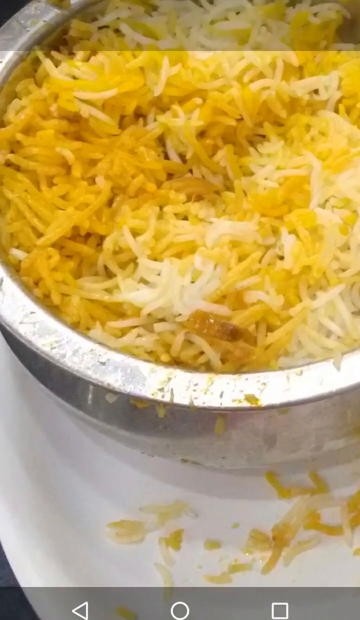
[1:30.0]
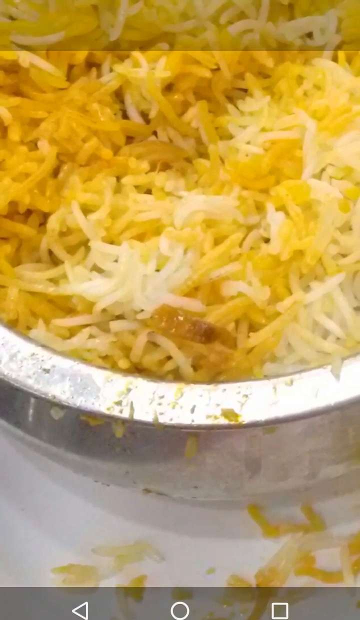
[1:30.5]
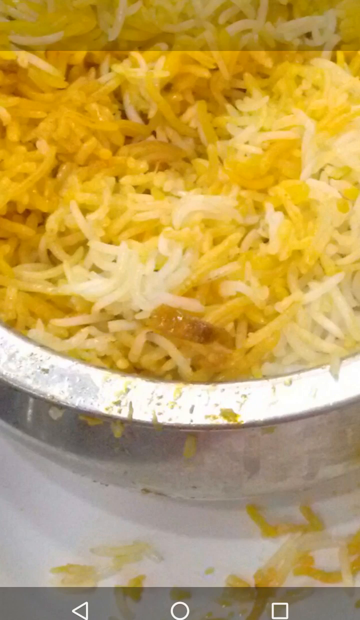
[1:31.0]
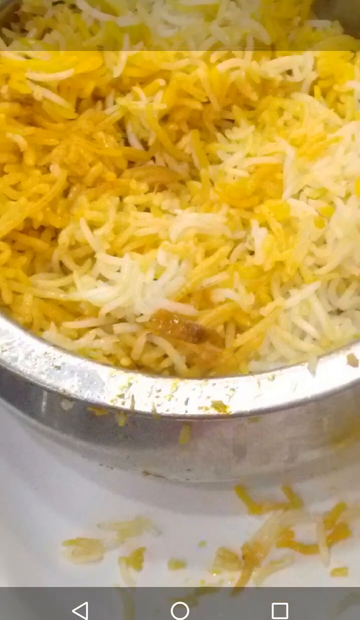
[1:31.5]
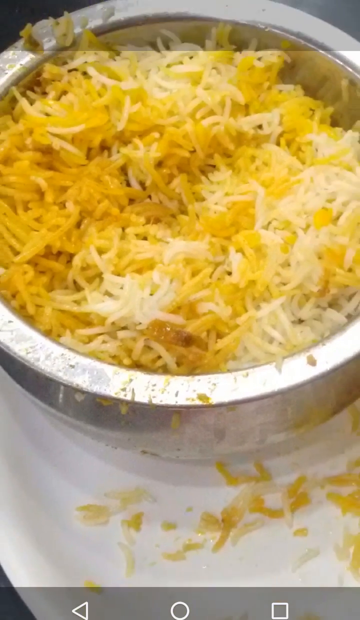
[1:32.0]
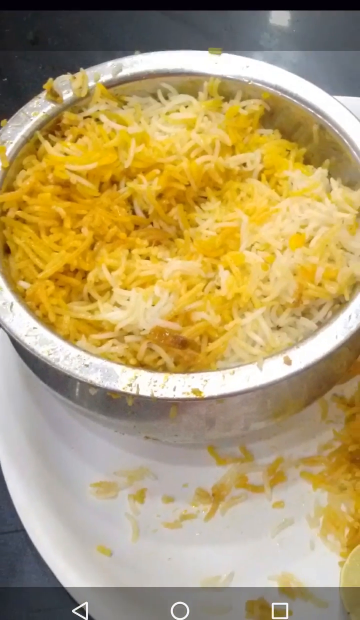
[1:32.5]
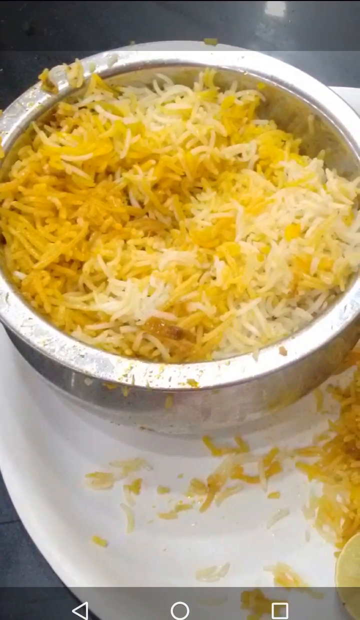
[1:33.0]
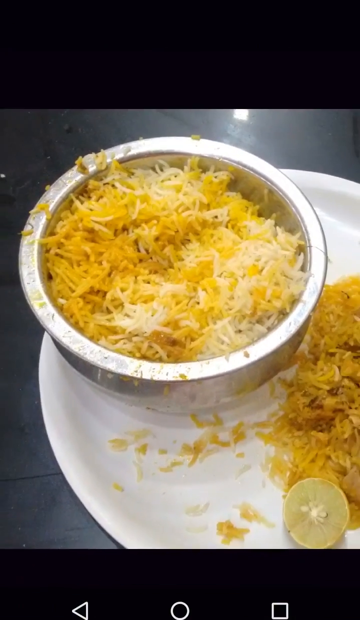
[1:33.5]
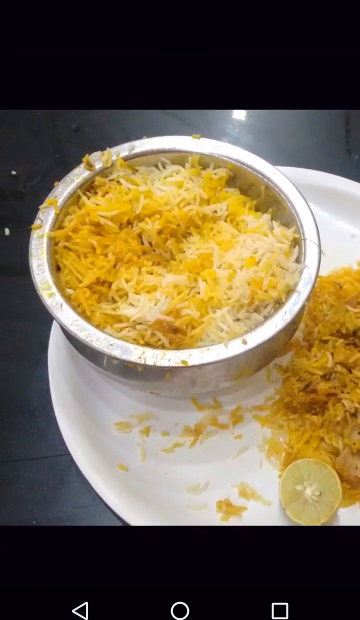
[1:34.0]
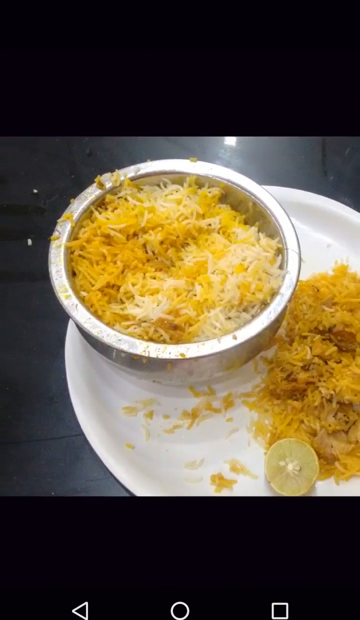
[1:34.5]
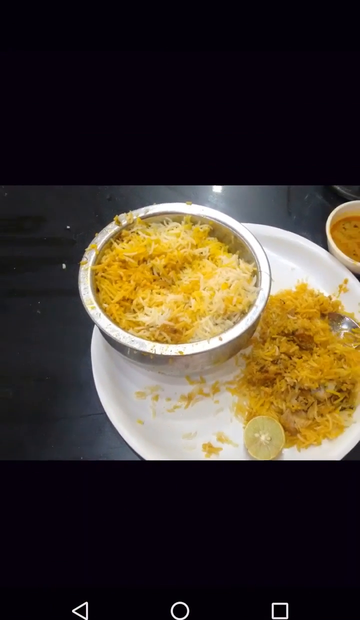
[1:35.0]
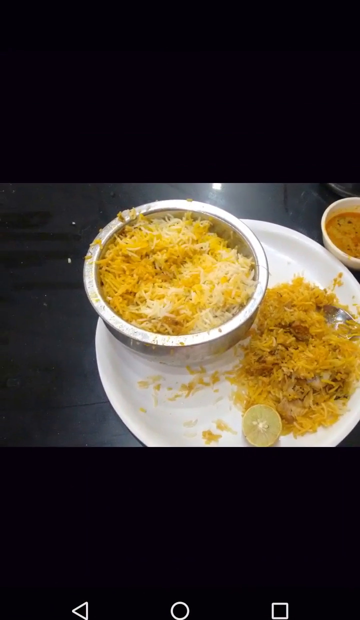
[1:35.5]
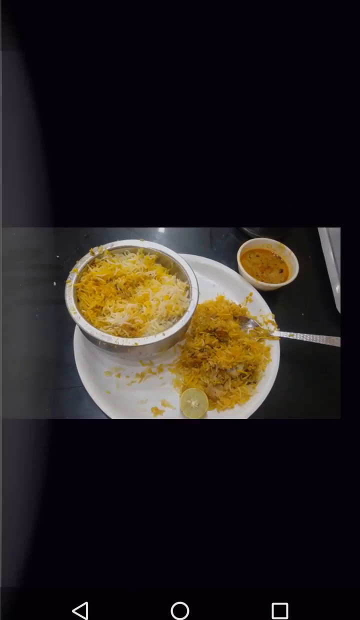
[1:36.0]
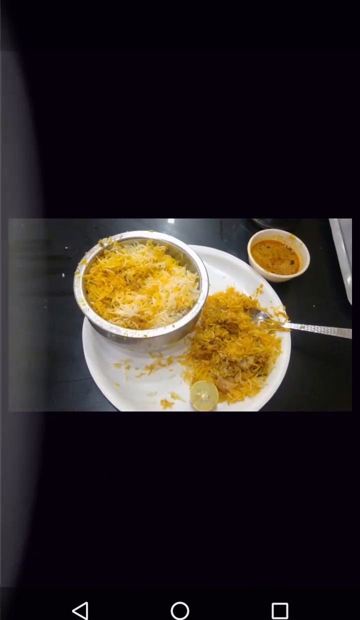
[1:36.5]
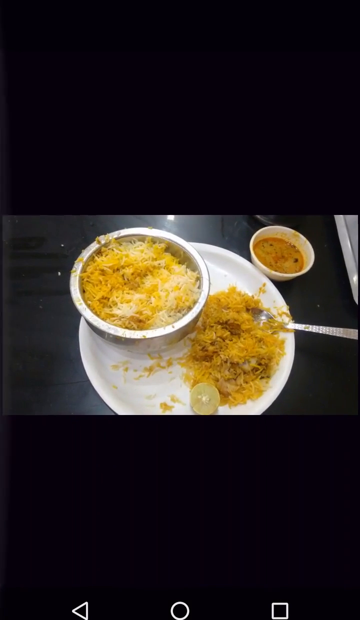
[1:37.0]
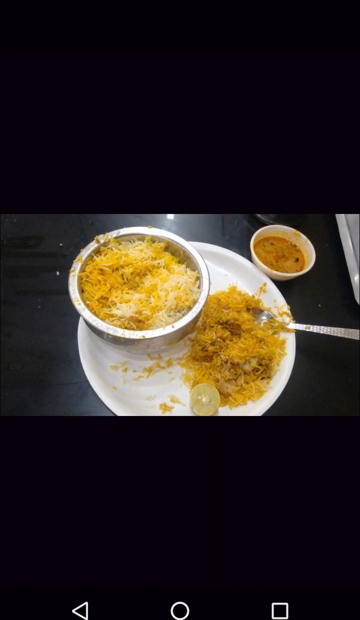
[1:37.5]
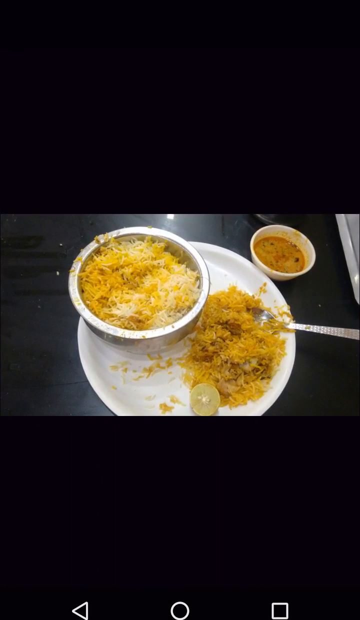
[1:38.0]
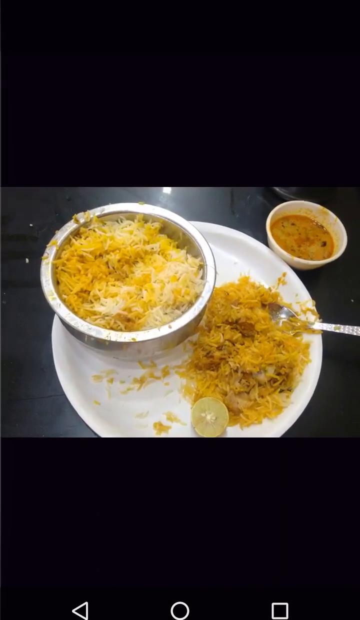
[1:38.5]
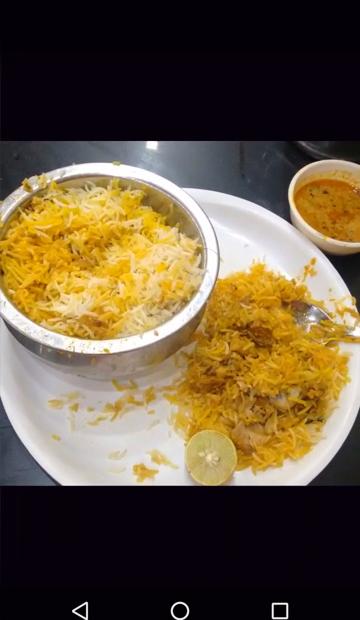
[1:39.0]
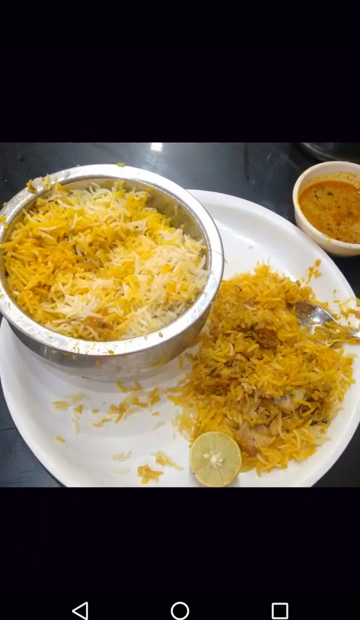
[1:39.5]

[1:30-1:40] In the Photo Compress app, a picture is being cropped, with the crop moved far back and then in closer, and the image is resized. The picture shows rice in a metal plate; close up it does not look very nice, but pulled back a bit it looks very nice.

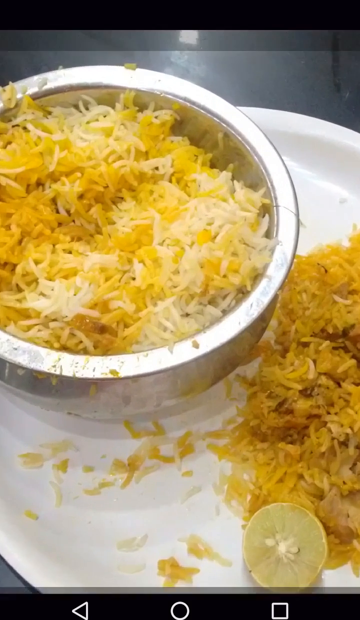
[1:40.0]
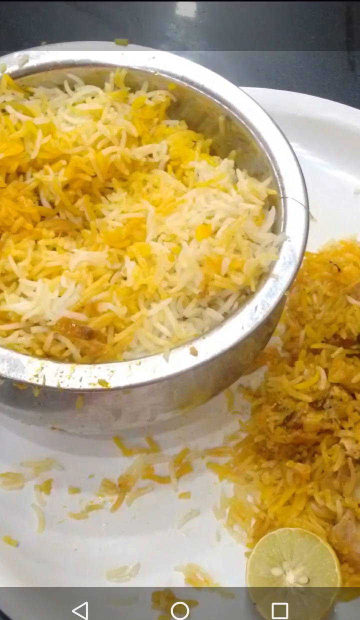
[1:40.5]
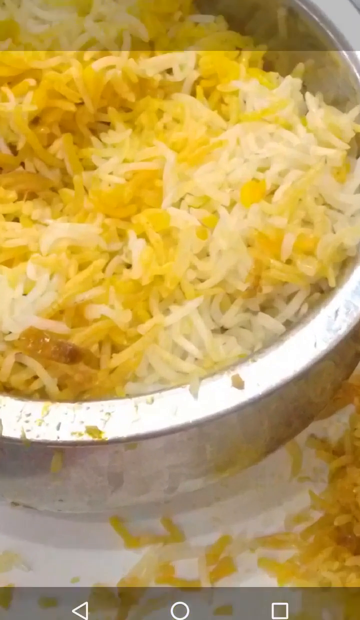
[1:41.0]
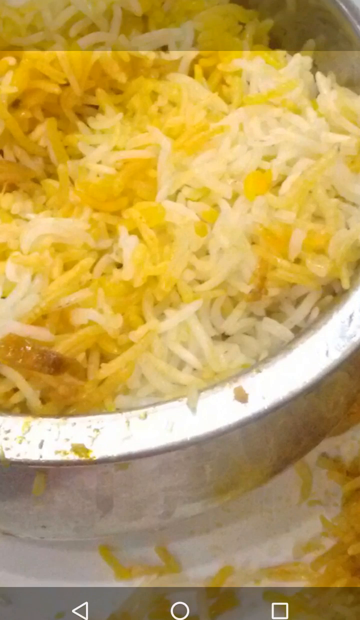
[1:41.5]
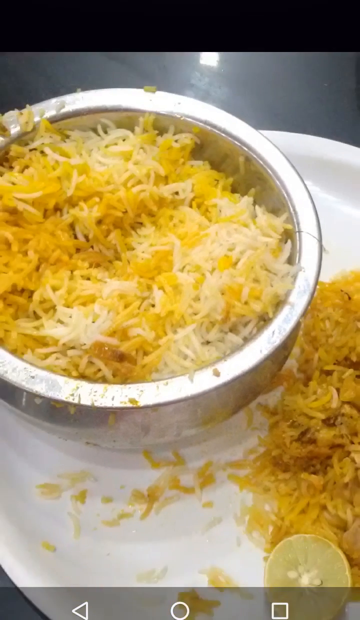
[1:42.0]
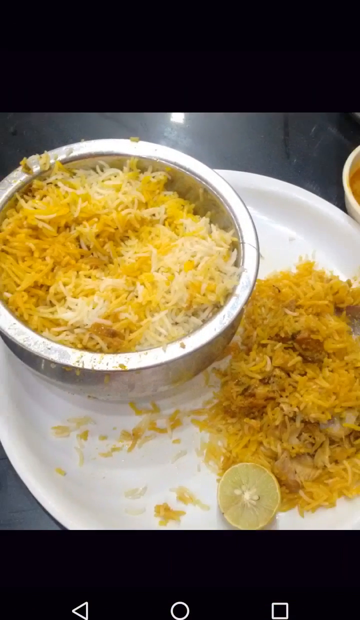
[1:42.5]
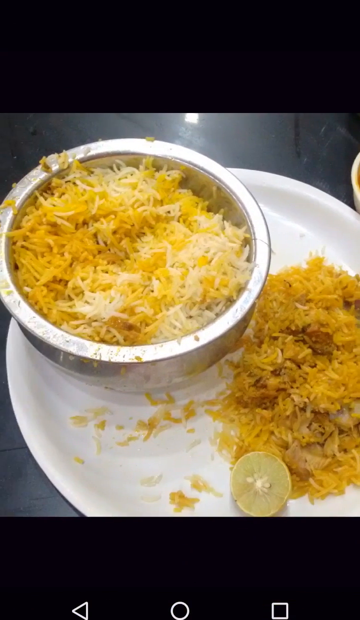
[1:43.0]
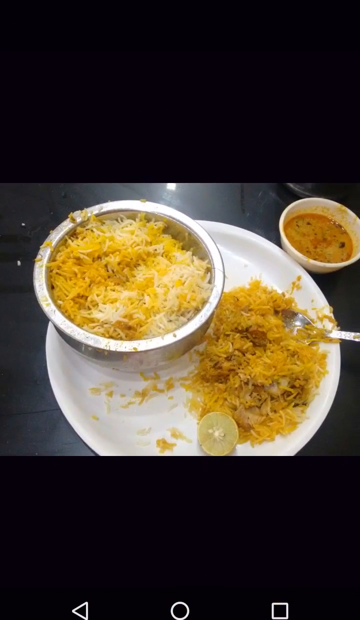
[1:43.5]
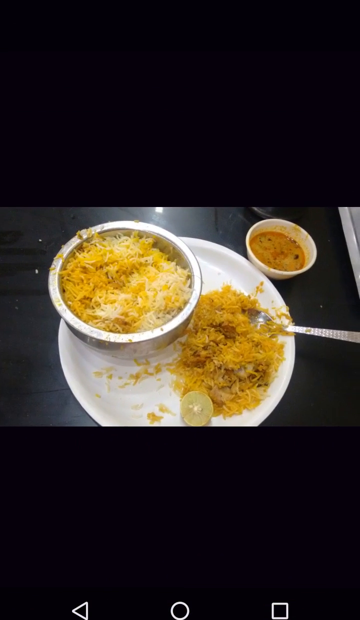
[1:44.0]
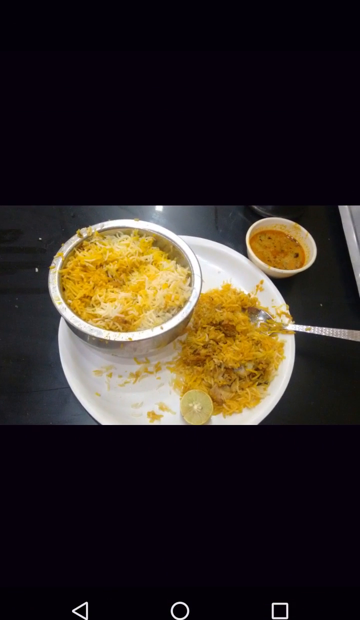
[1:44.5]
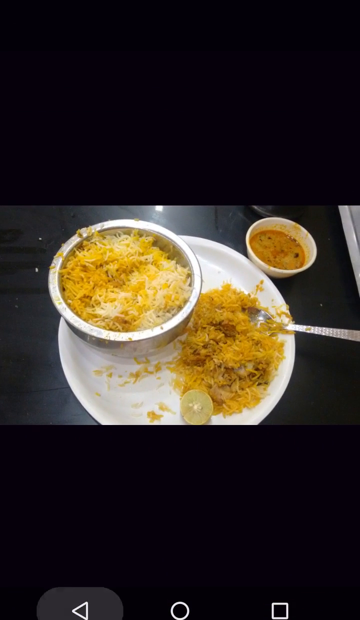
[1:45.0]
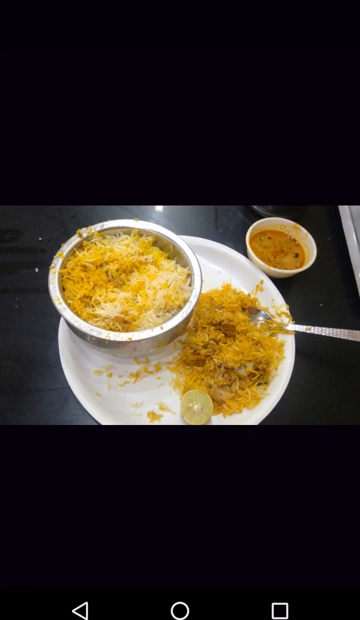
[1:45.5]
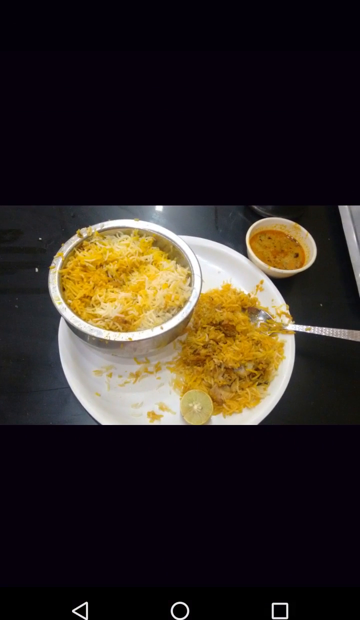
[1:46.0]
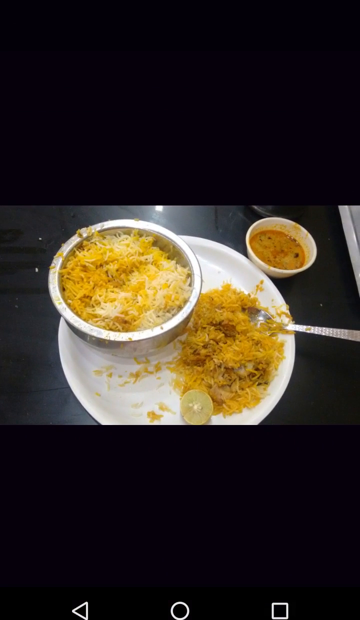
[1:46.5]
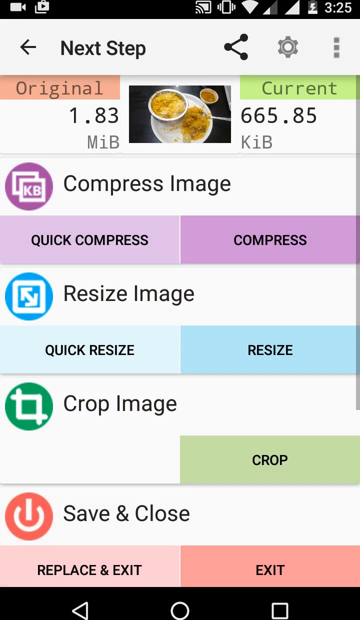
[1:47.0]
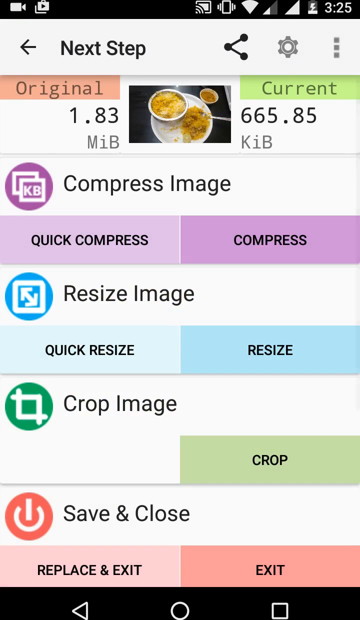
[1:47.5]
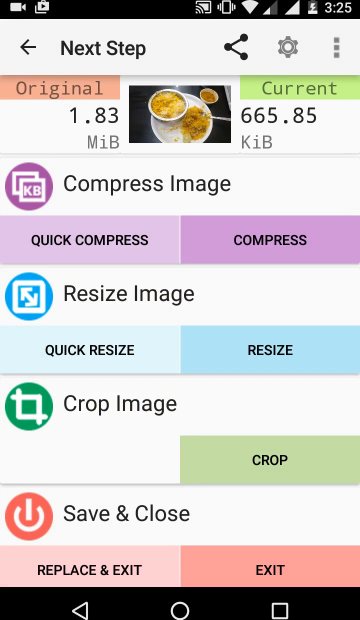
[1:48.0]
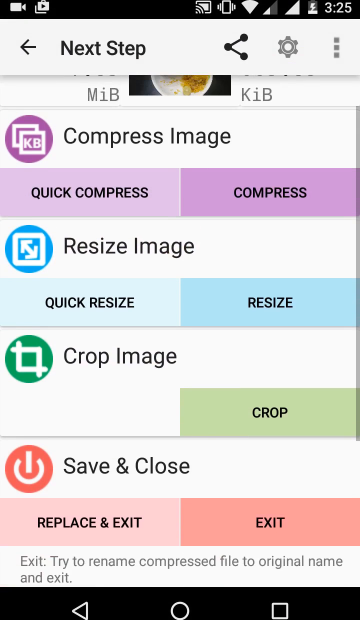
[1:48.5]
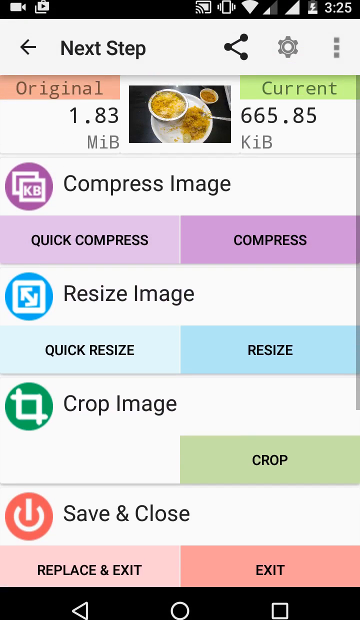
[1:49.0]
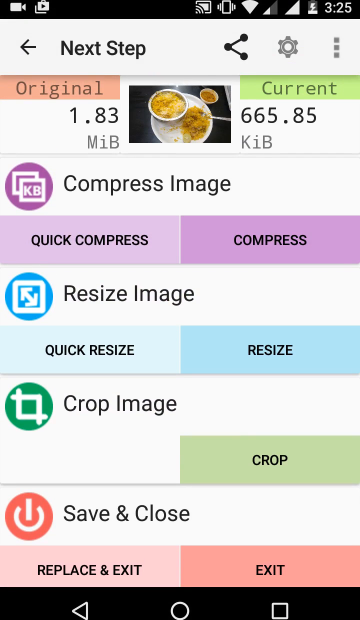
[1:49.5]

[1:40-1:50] The plate of rice is still being cropped in the Photo Compress app, and there is a lemon behind it. The image is then resized. Some of the rice has spilled, and the lemon is cut up. Cropping backwards lets the whole thing be seen clearly, and after cropping the image is saved.